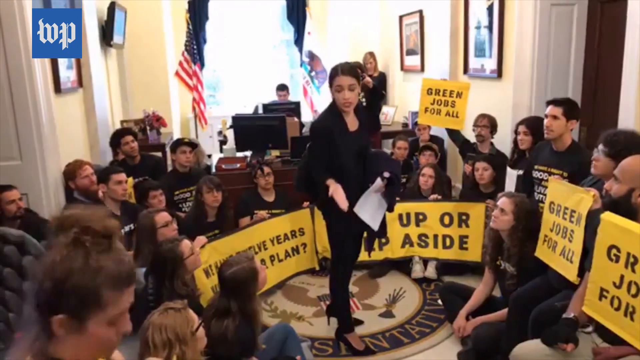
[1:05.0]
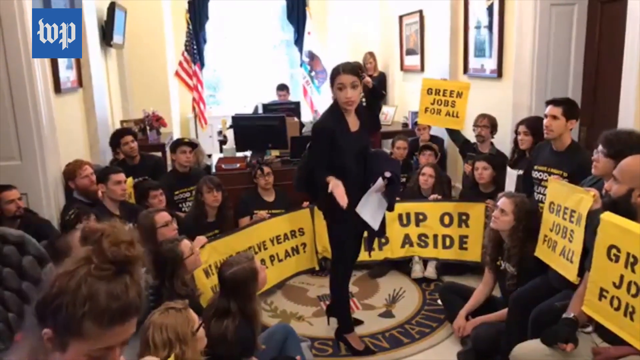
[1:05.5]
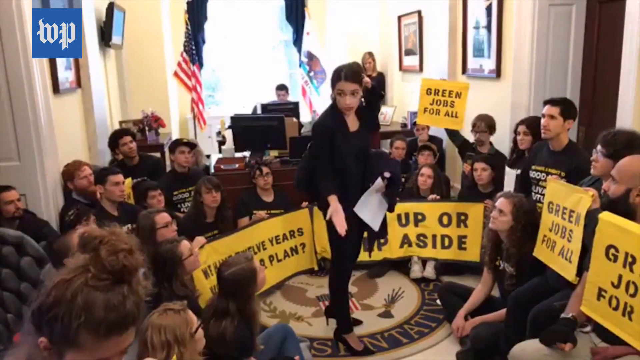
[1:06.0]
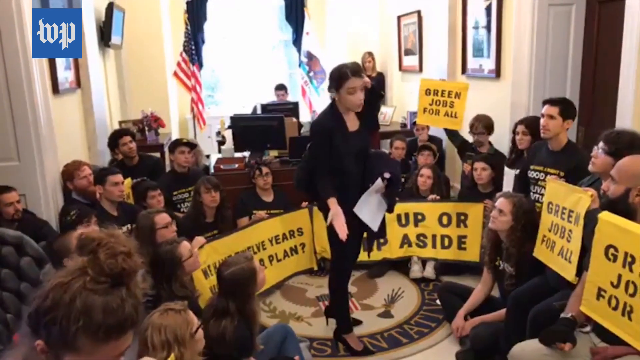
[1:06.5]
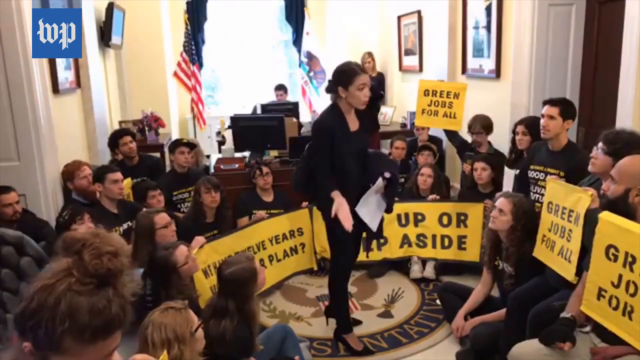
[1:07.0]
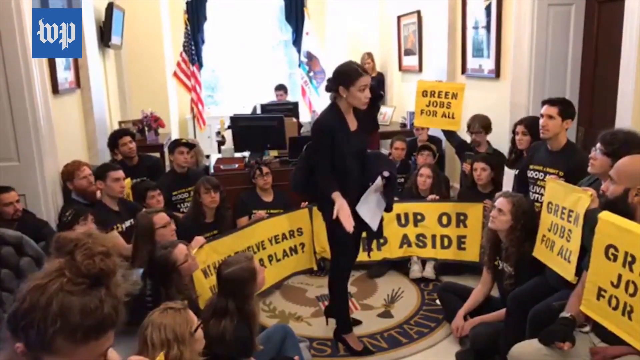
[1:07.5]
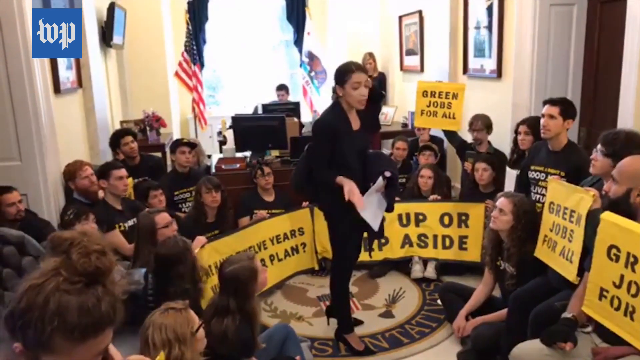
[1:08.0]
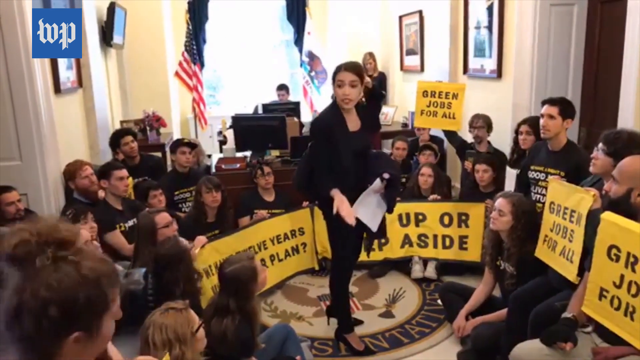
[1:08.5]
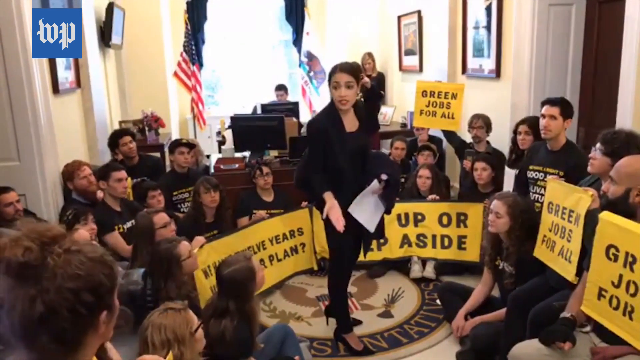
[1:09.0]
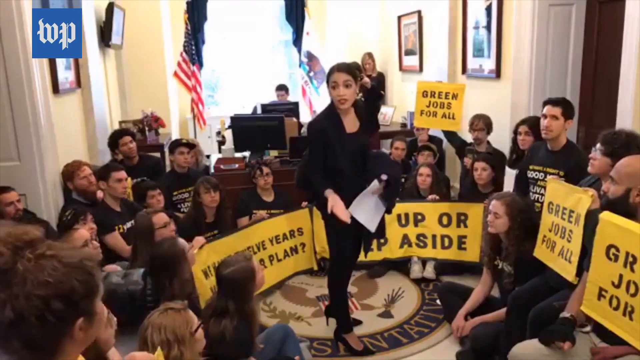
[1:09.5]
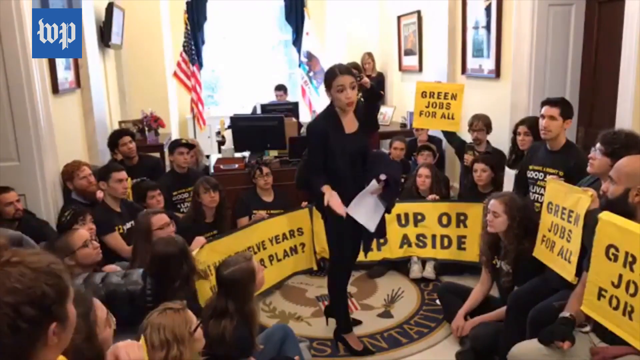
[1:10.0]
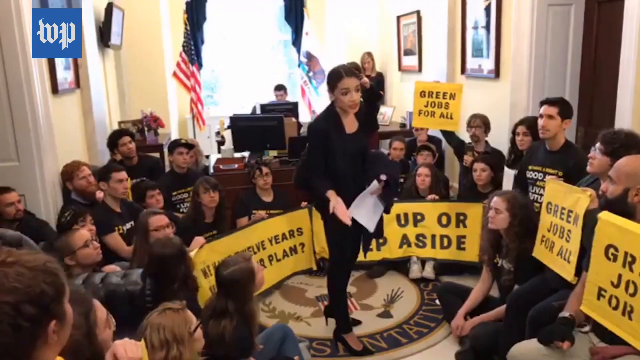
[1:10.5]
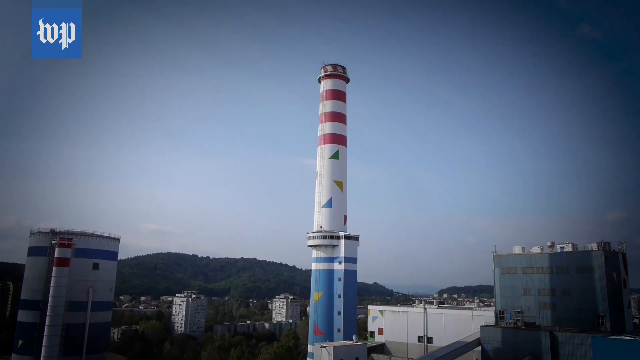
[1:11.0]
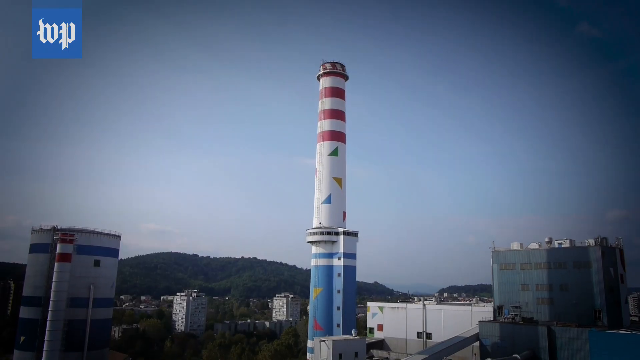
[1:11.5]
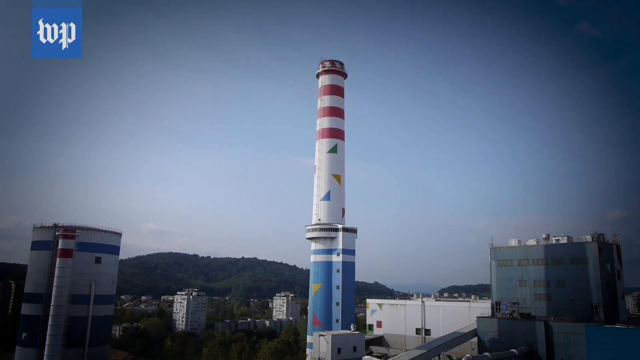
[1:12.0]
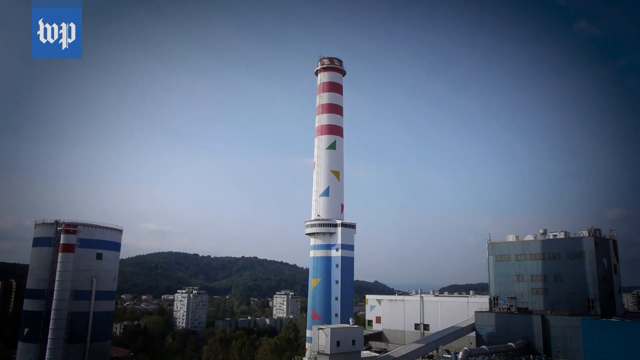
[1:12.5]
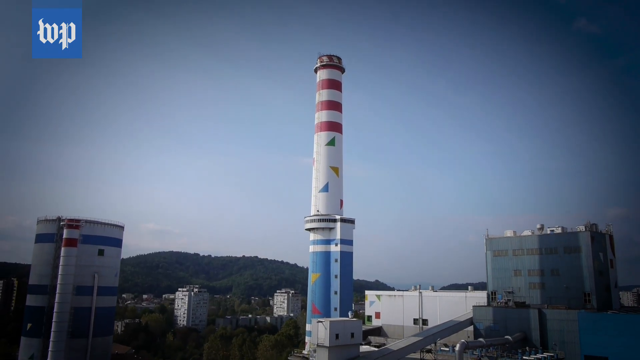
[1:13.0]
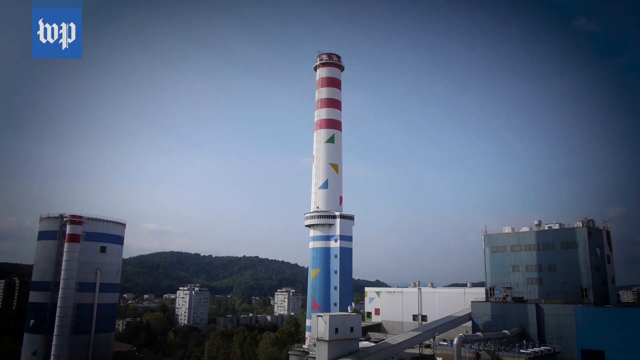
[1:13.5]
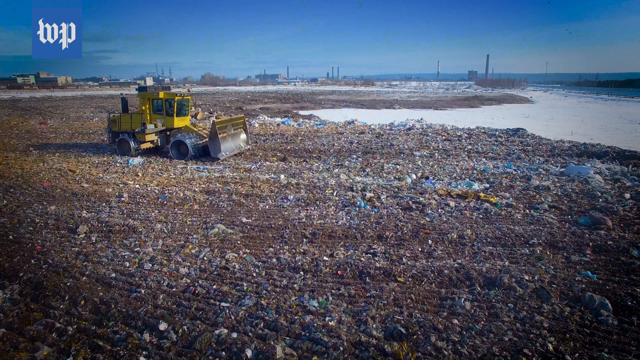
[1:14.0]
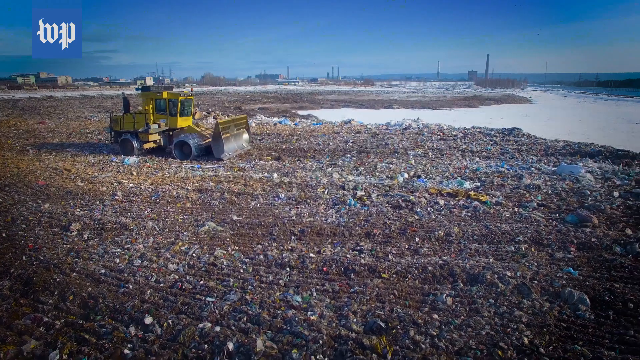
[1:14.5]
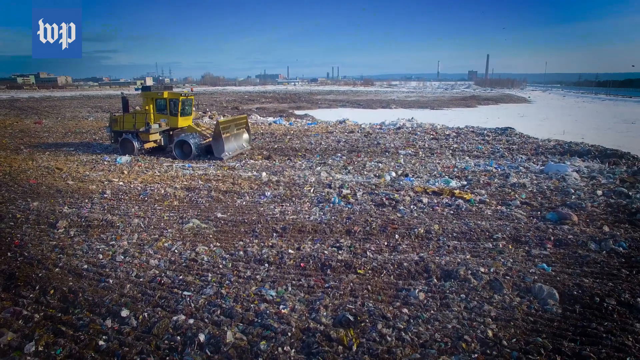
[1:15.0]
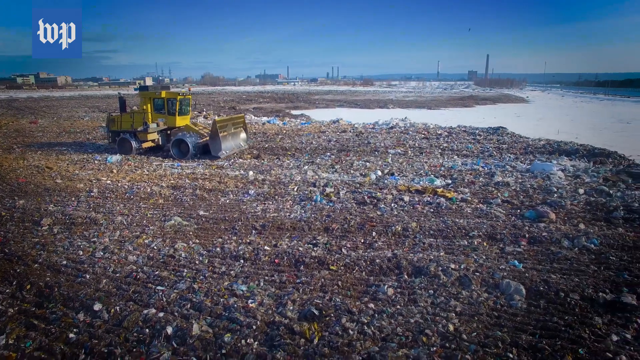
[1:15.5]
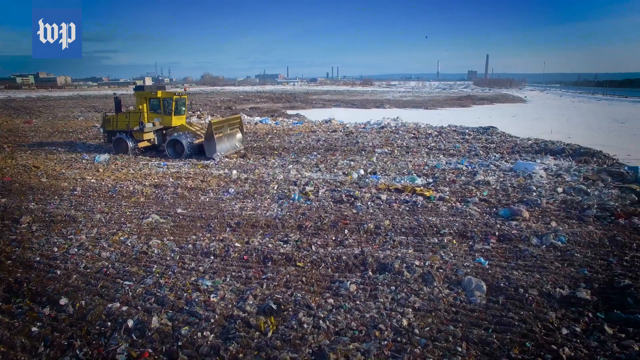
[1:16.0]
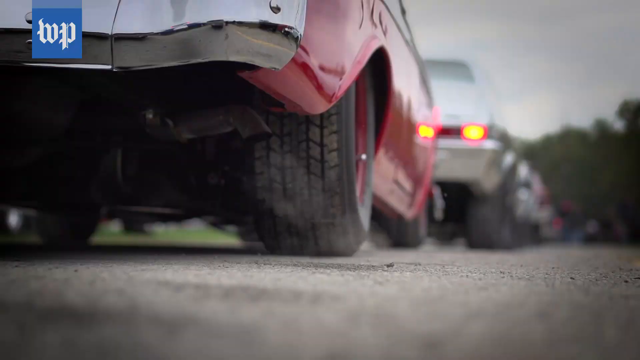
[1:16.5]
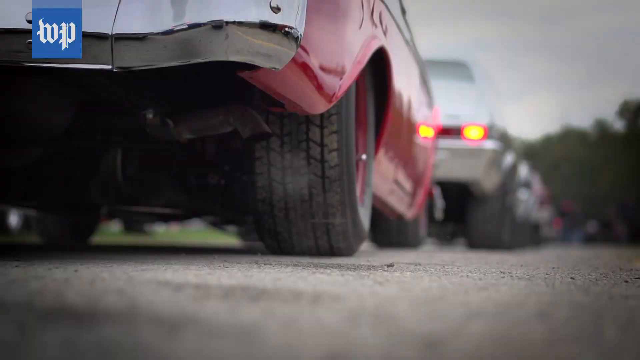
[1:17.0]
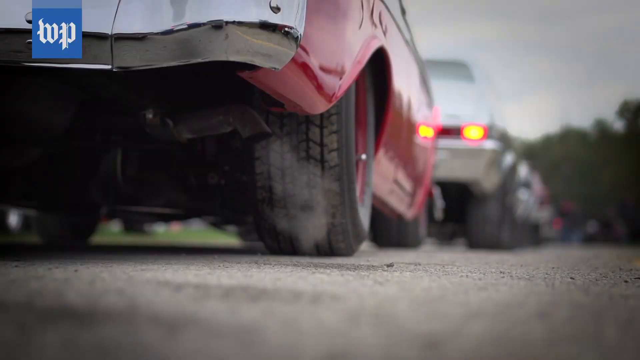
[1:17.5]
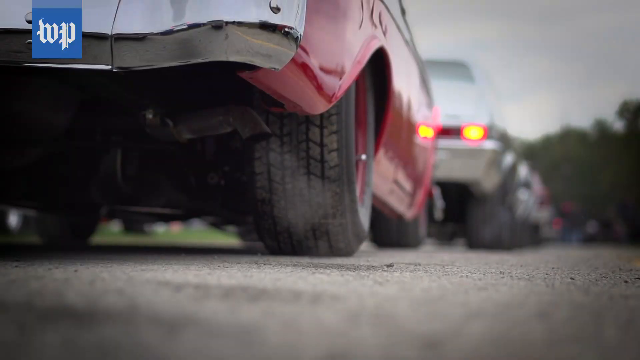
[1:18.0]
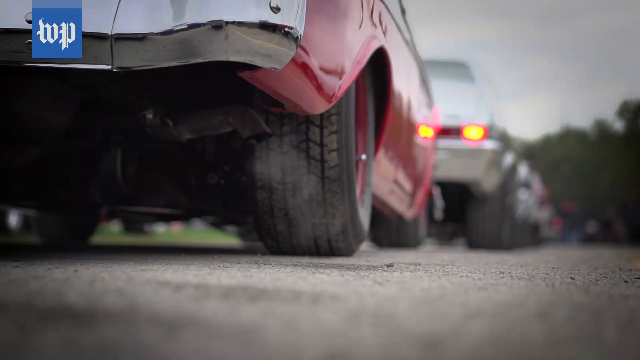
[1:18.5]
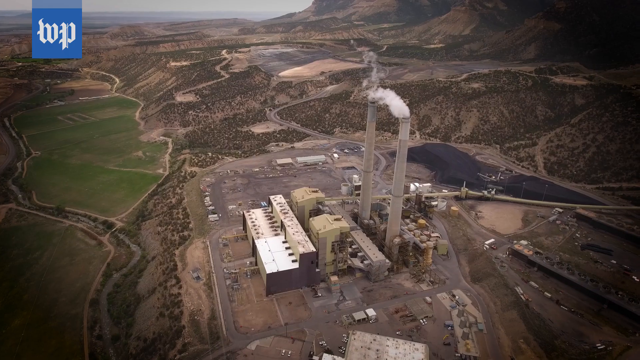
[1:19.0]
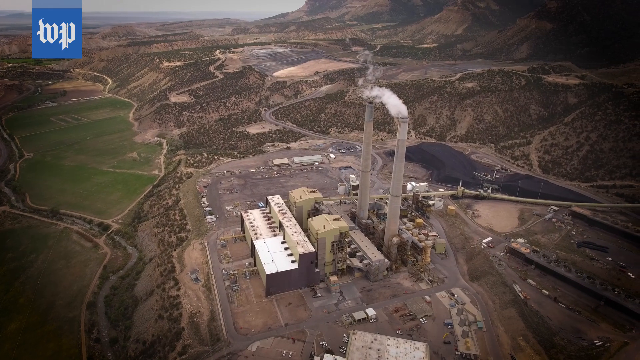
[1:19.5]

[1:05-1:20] Alexandria Ocasio-Cortez continues speaking to young people of the Sunrise Movement, who wear black shirts; some adults are with the young people, who sit on the ground. The room is a U.S. representative's office, probably hers. She wears an all-black suit, heels, and earrings with circles, and she speaks with her hands, motioning as she talks. The video then switches to a picture of a trash compactor, apparently where trash is burned, followed by a wasteland where a truck scoops up a lot of trash. Then a car's muffler is shown among many cars in traffic, with the gas being pumped out emphasized.